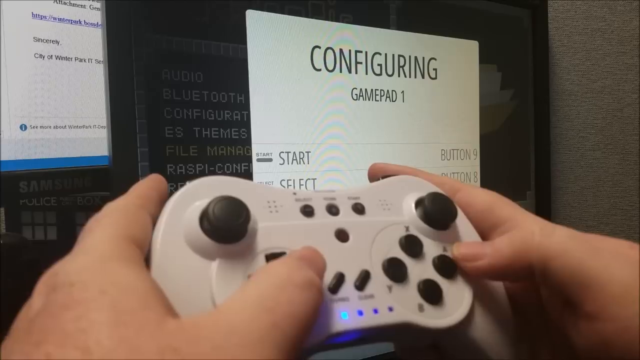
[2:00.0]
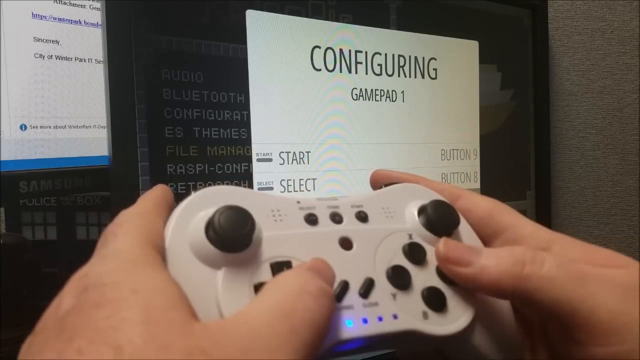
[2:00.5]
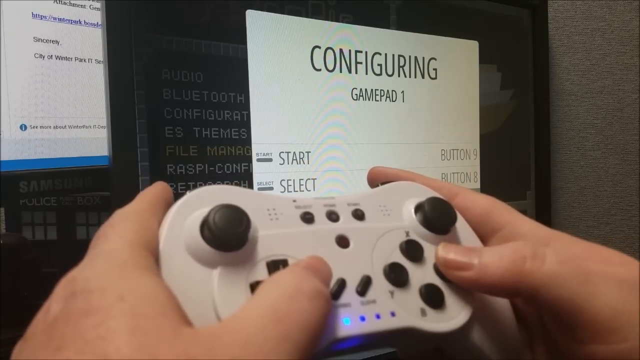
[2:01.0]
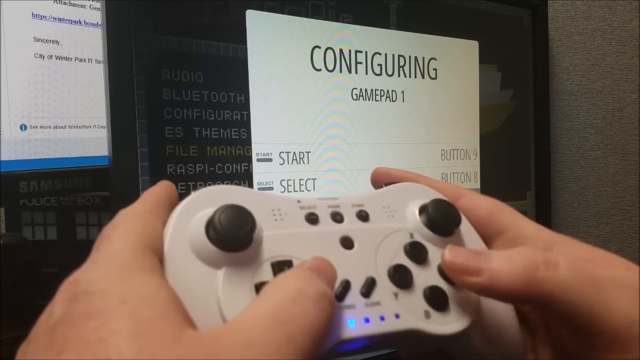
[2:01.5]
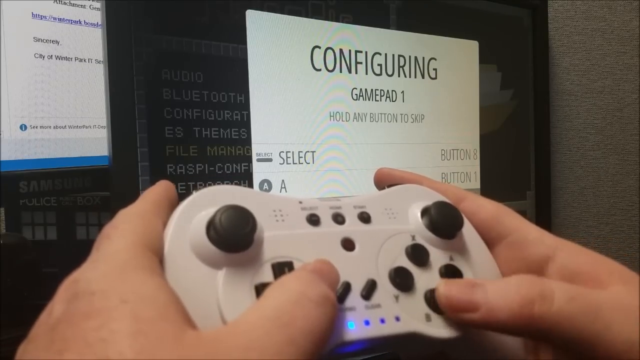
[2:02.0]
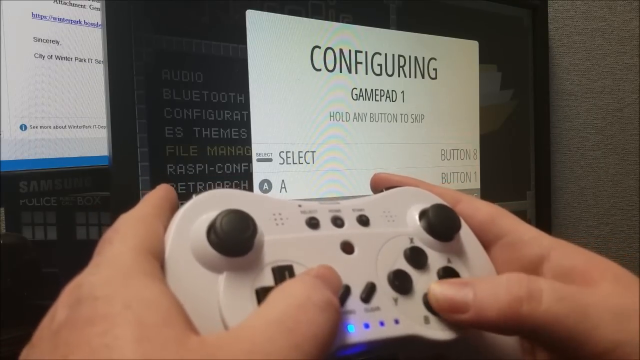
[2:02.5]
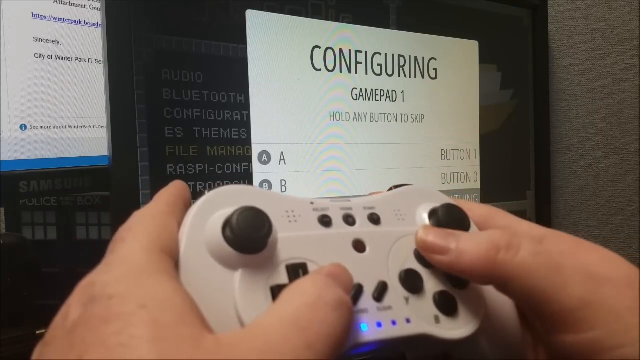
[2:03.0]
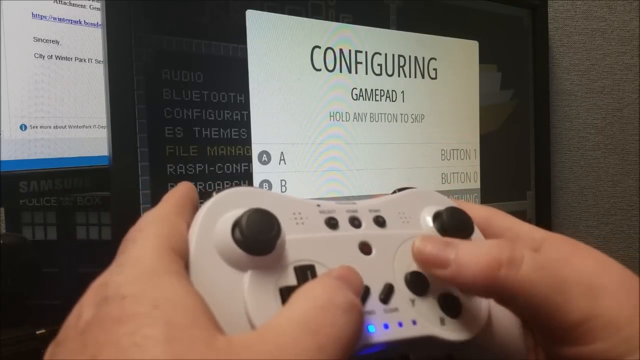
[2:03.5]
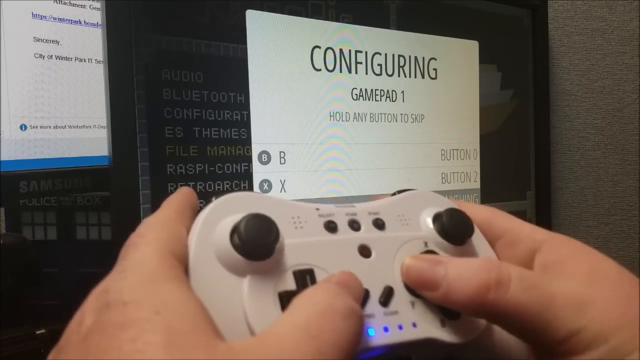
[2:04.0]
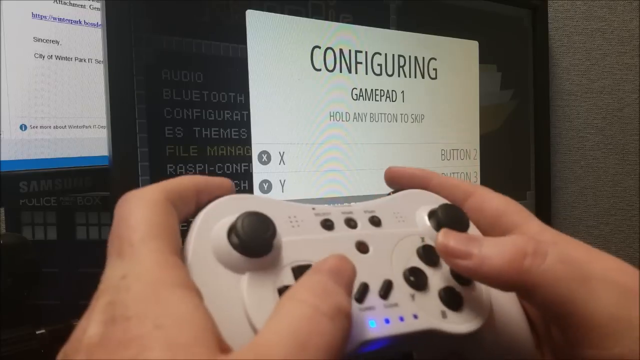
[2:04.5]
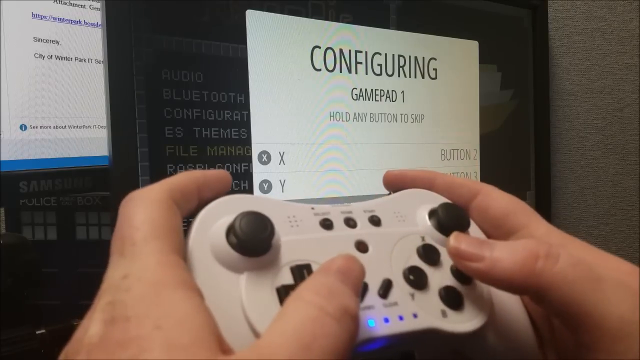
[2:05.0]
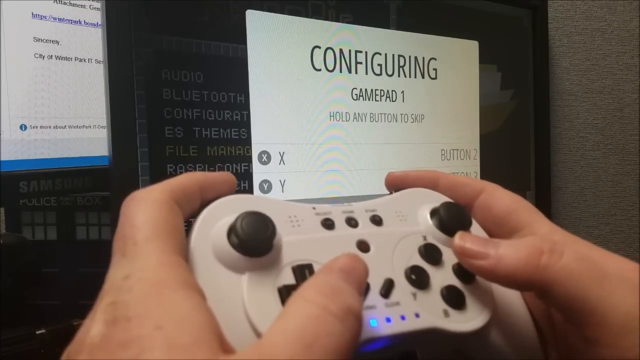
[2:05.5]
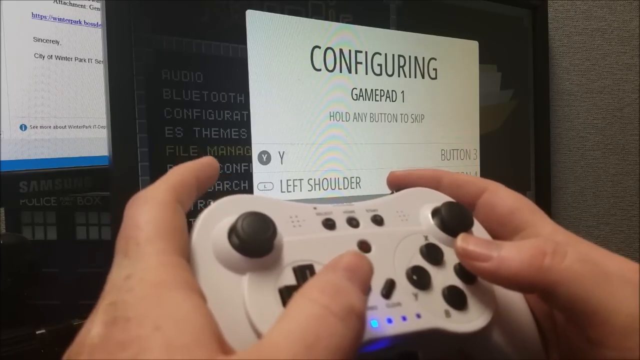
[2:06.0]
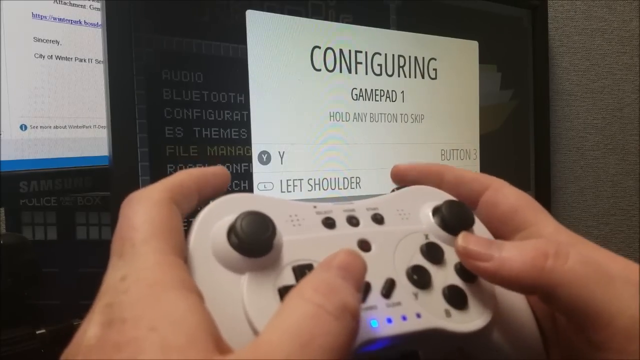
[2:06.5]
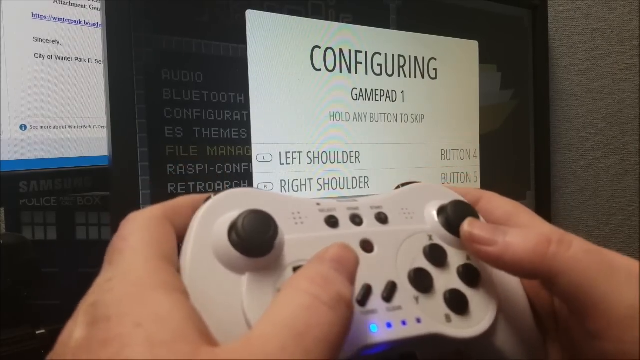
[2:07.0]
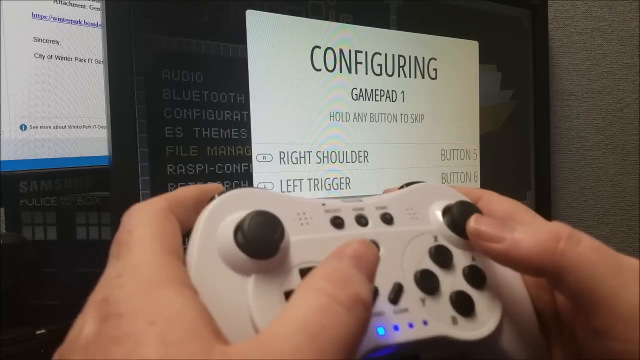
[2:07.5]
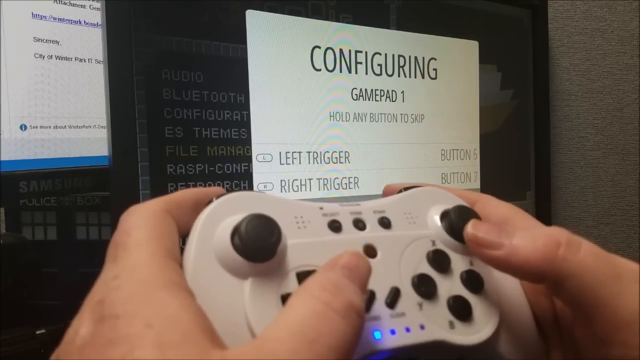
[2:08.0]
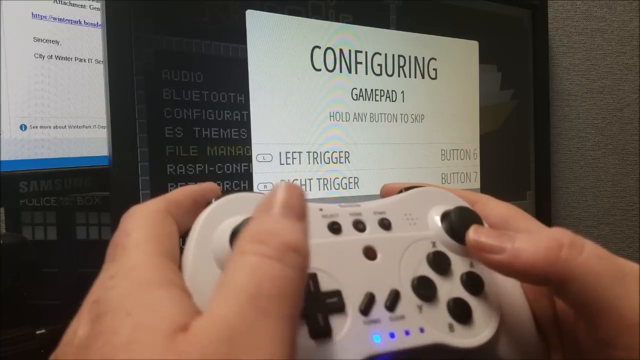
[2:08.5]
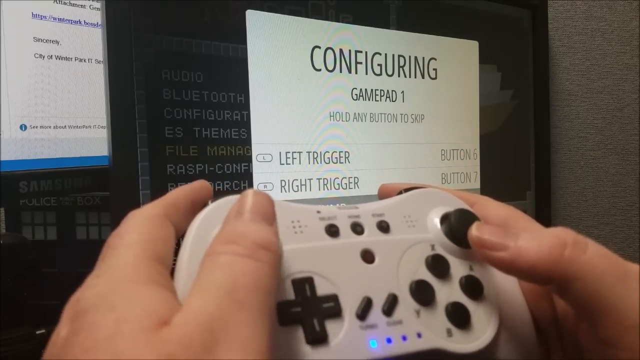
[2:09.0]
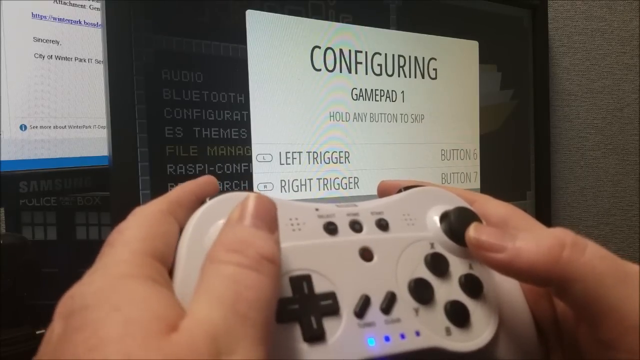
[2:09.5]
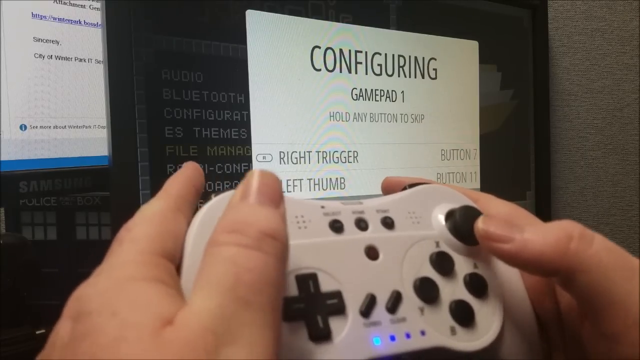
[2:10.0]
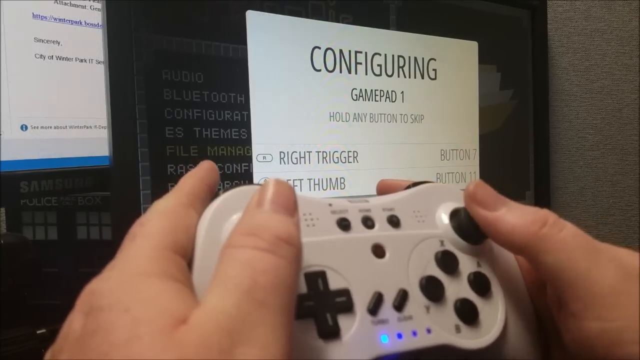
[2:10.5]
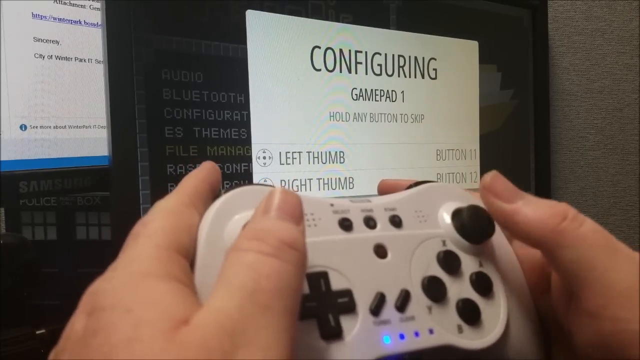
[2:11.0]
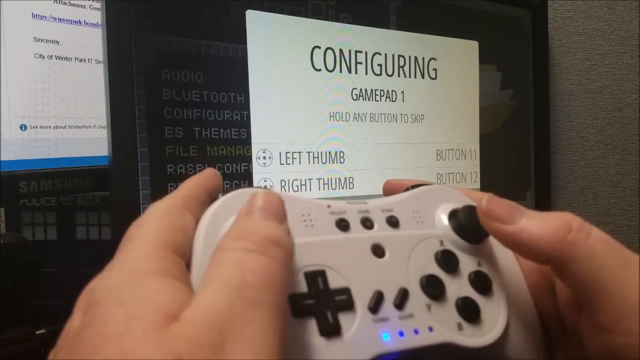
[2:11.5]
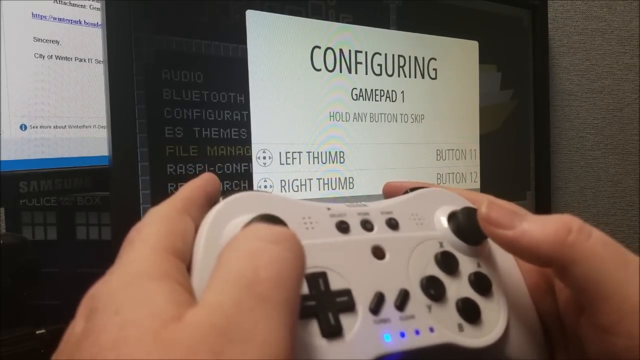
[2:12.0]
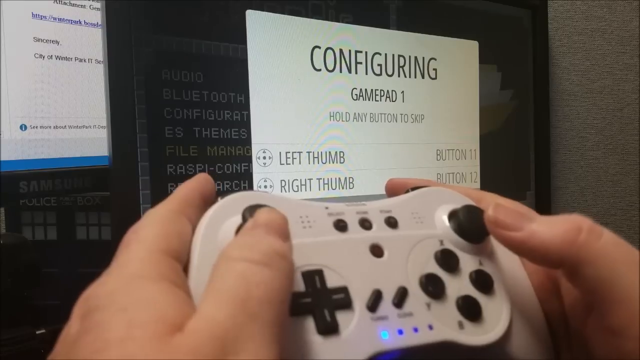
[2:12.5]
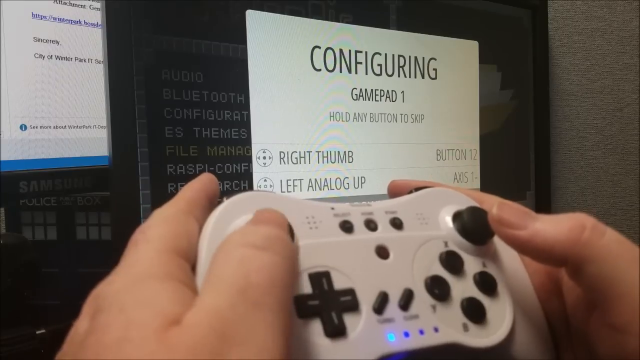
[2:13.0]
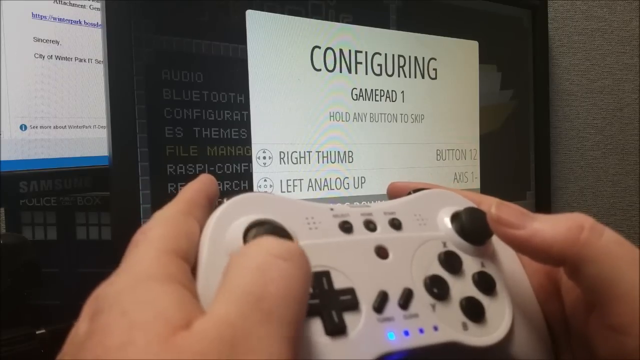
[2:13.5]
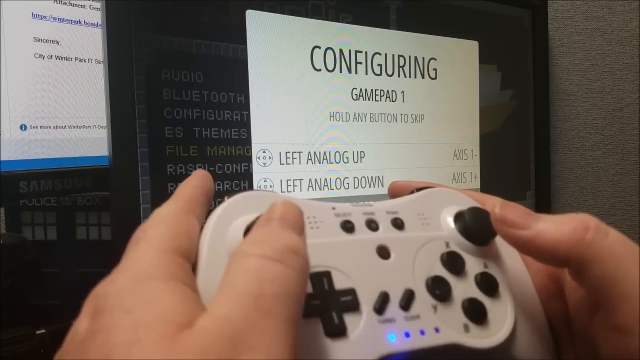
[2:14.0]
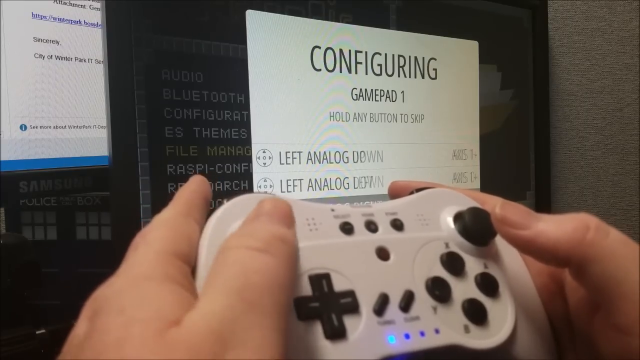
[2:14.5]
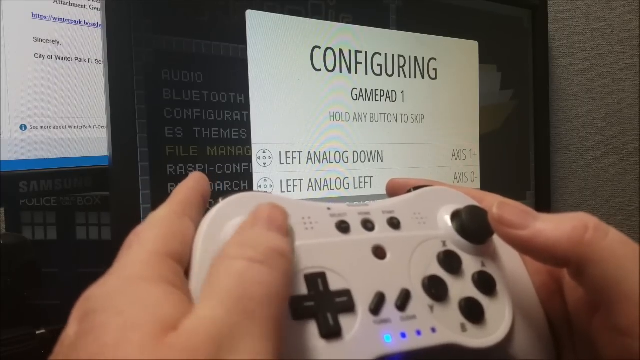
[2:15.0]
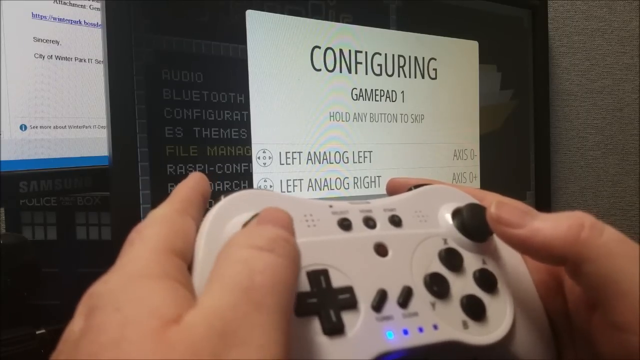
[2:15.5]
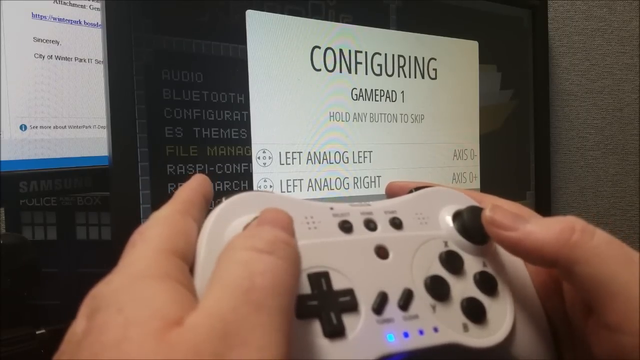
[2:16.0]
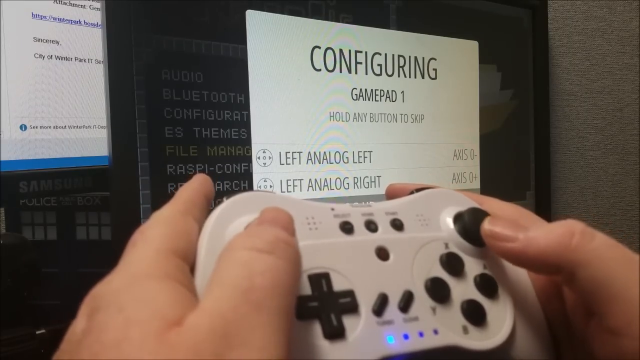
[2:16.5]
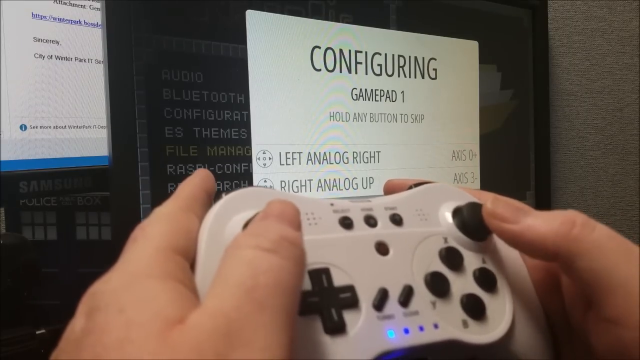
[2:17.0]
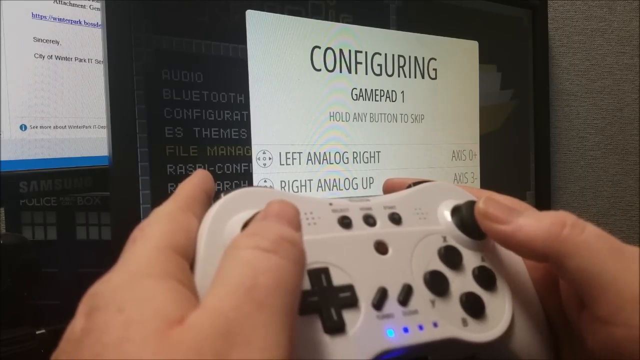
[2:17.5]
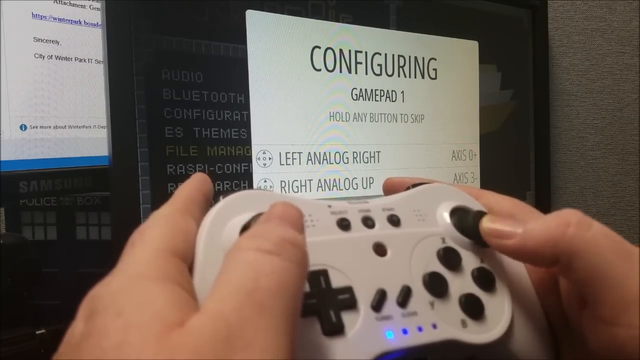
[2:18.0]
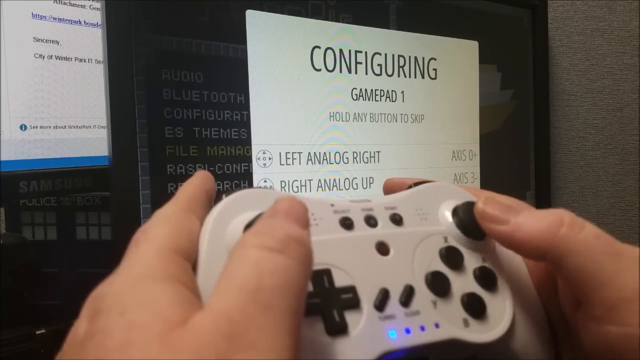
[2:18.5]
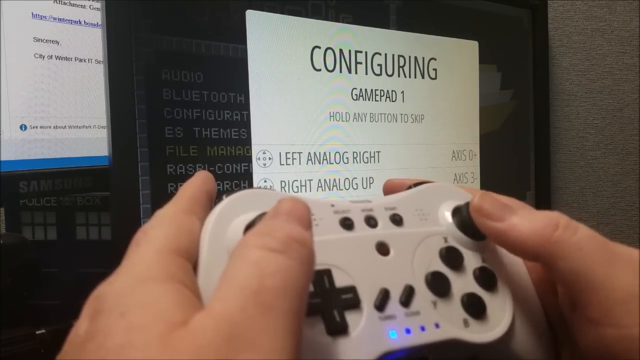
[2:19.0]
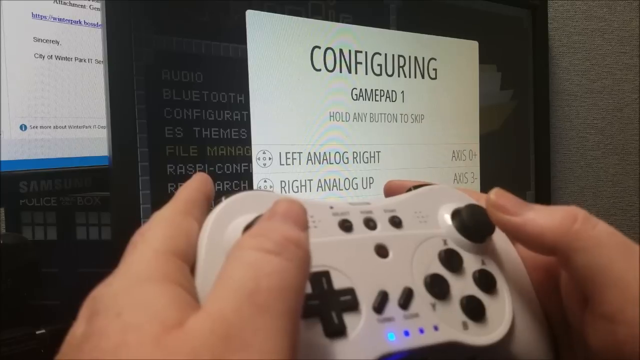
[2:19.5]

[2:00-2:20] Two computer monitors are visible: almost all of the front one, and only the left corner of a Samsung behind it. In the foreground, a person's hands hold a video game controller with a white body, black buttons and blue lights. On the front monitor, a white pop-up box takes up most of the screen, with black text reading "configuring gamepad 1" and below that "start, button 9, select, button 8". The person uses their thumbs to press buttons on the controller, and the Configuring Gamepad 1 pop-up box changes quickly as entries appear. They continue to press the joy button; there are two joy buttons, one on the upper right and one on the upper left. As they press the buttons, entries keep appearing in the box.